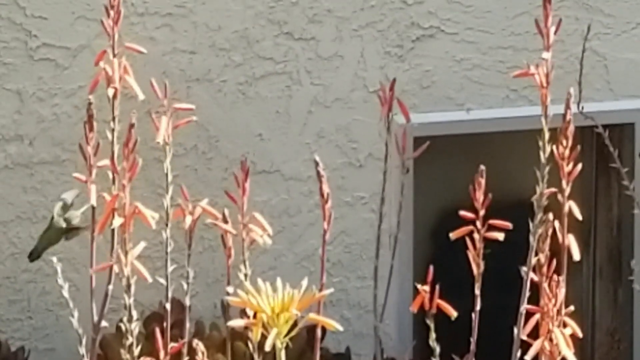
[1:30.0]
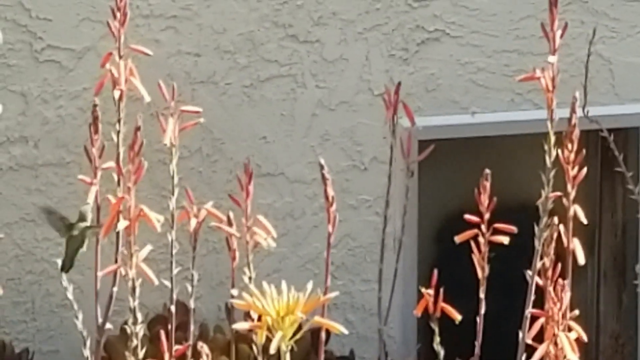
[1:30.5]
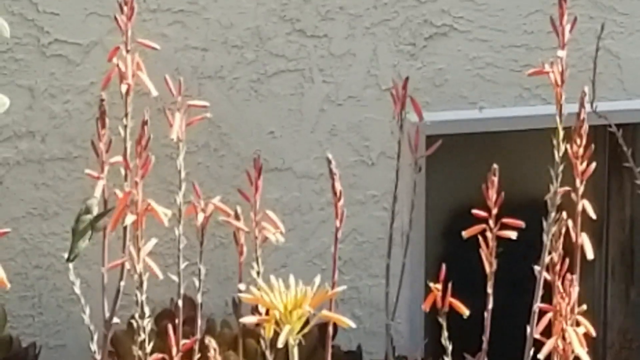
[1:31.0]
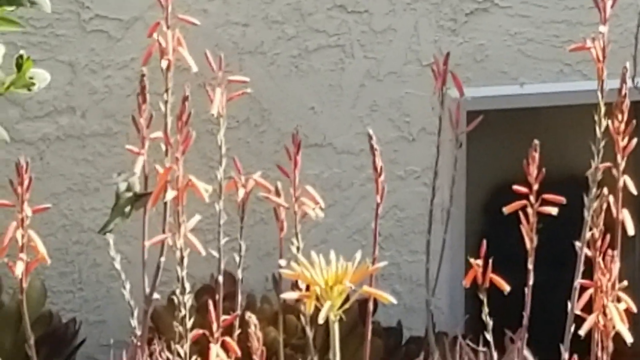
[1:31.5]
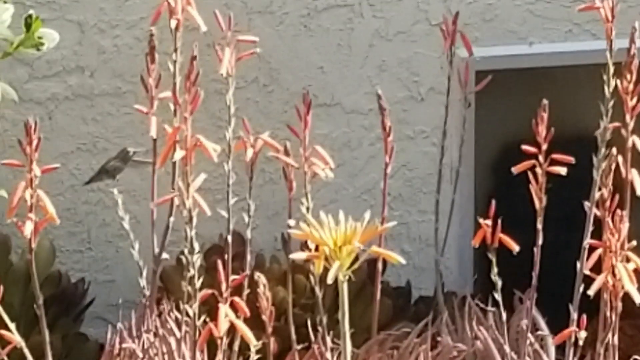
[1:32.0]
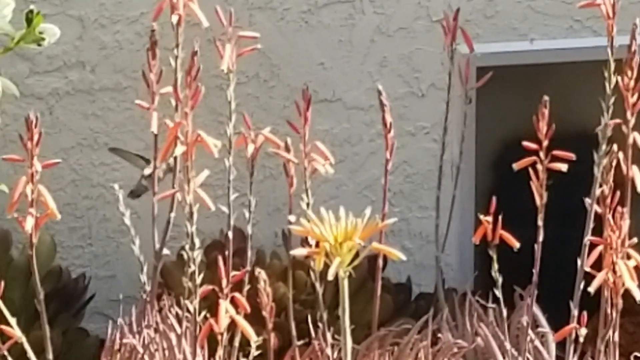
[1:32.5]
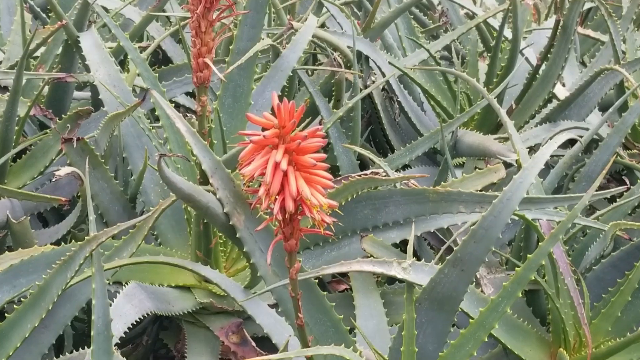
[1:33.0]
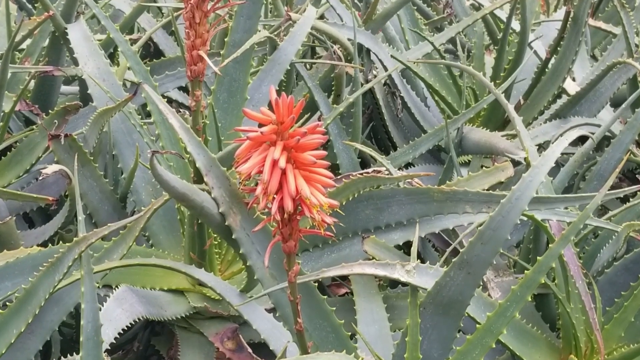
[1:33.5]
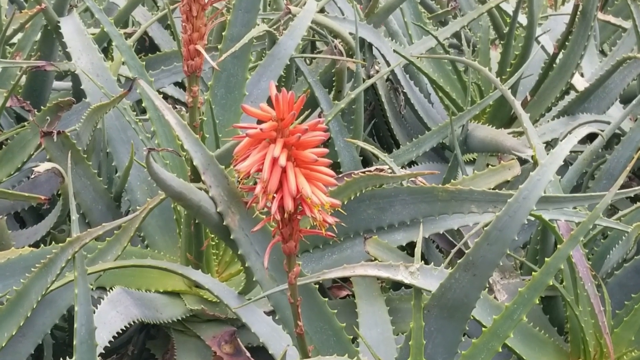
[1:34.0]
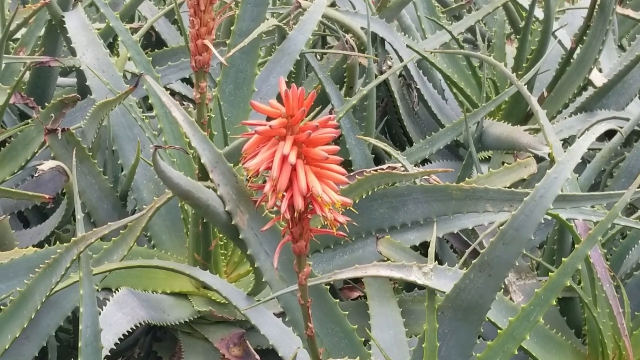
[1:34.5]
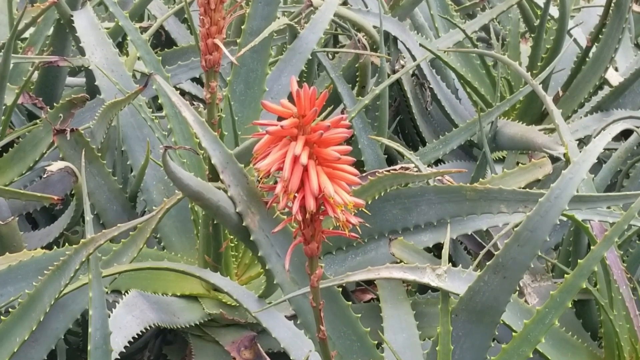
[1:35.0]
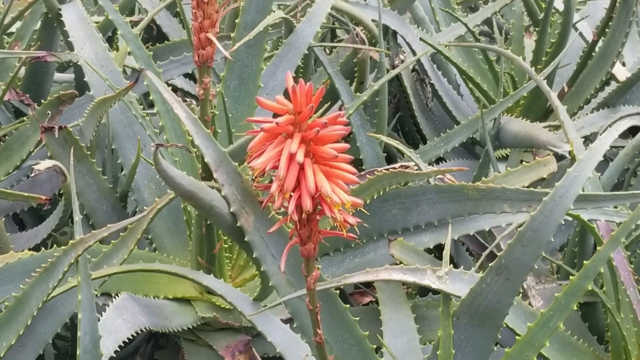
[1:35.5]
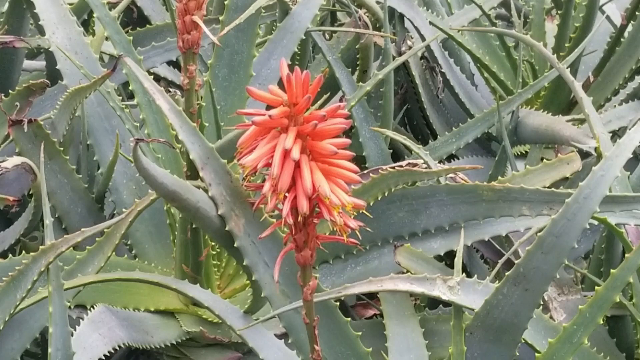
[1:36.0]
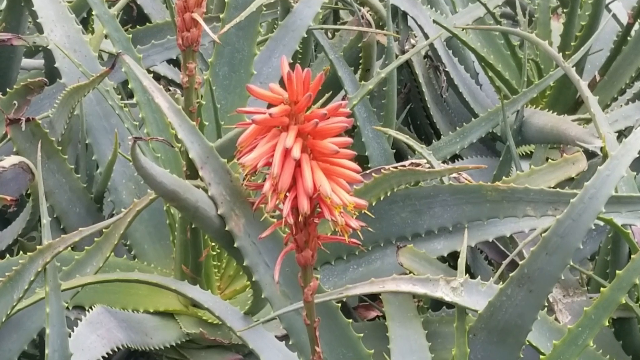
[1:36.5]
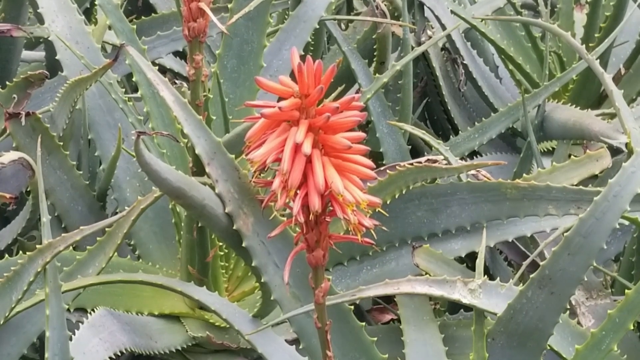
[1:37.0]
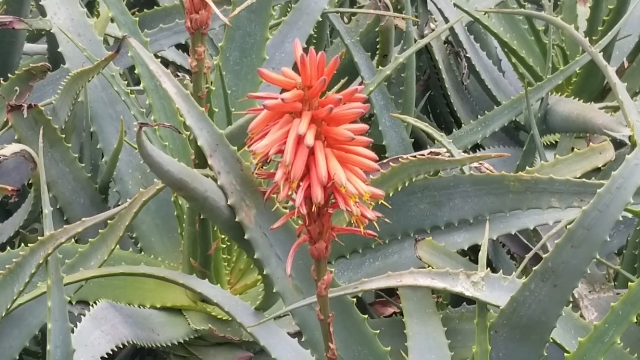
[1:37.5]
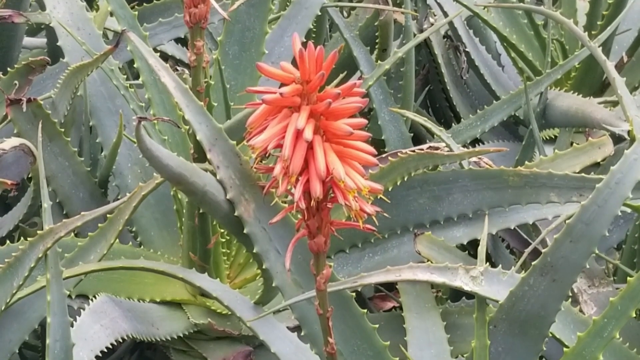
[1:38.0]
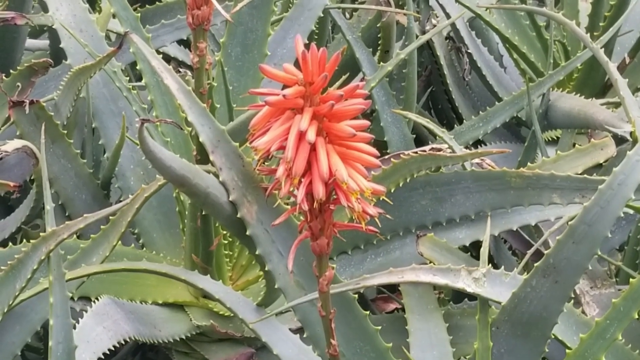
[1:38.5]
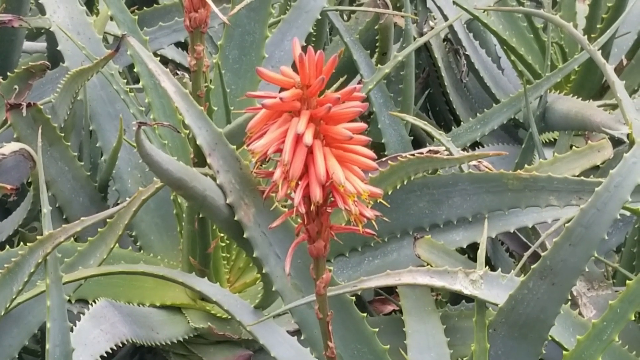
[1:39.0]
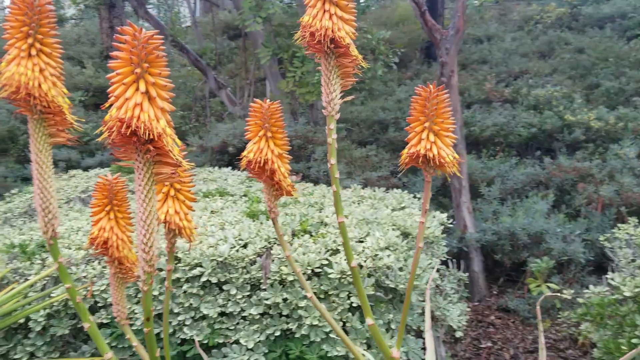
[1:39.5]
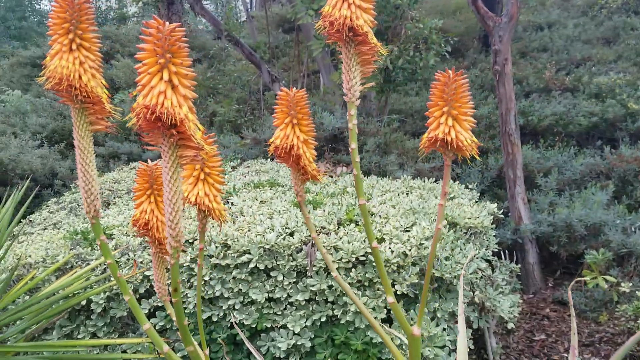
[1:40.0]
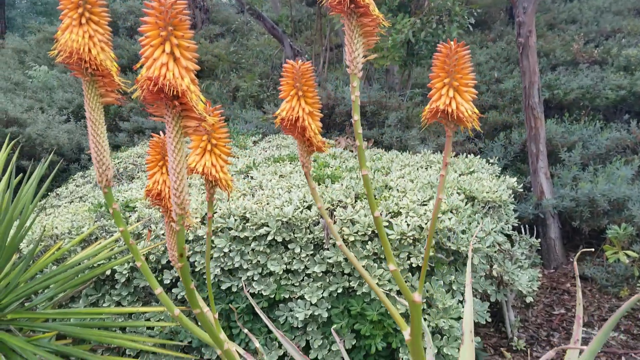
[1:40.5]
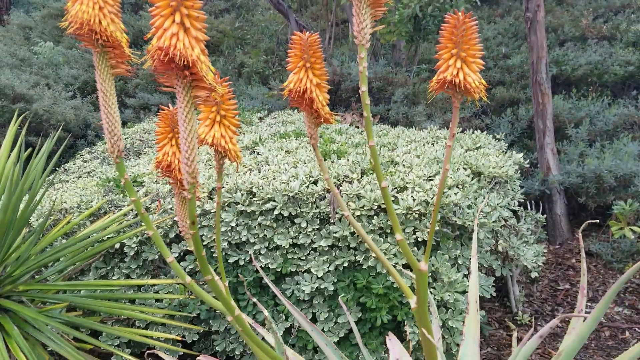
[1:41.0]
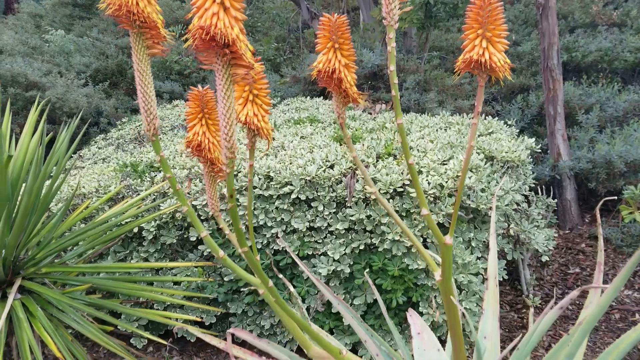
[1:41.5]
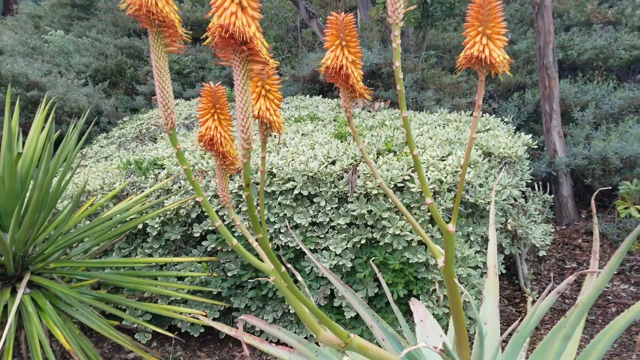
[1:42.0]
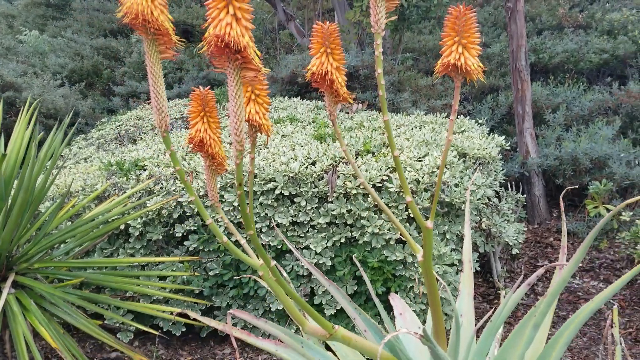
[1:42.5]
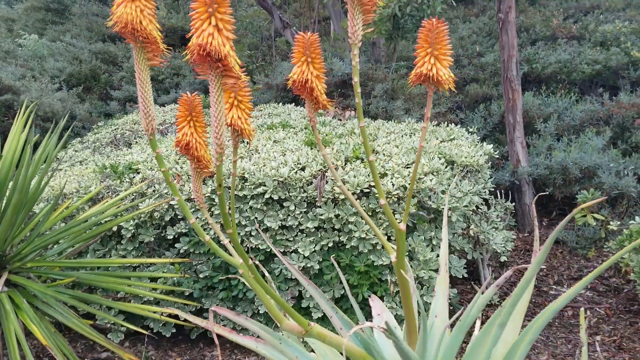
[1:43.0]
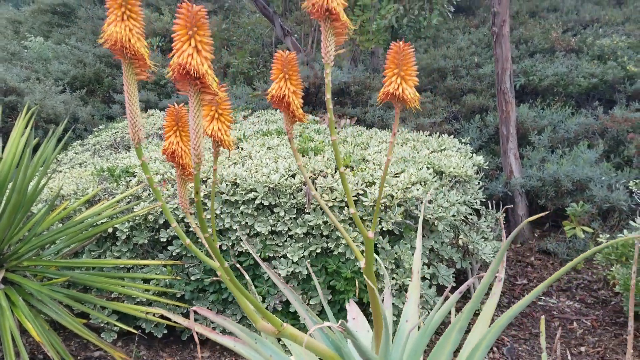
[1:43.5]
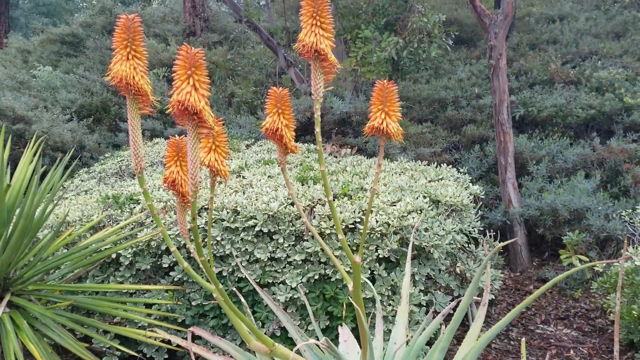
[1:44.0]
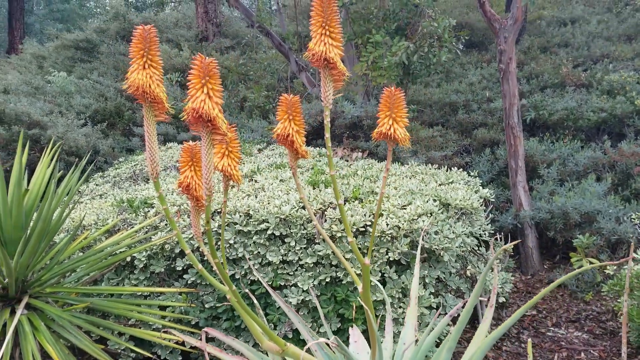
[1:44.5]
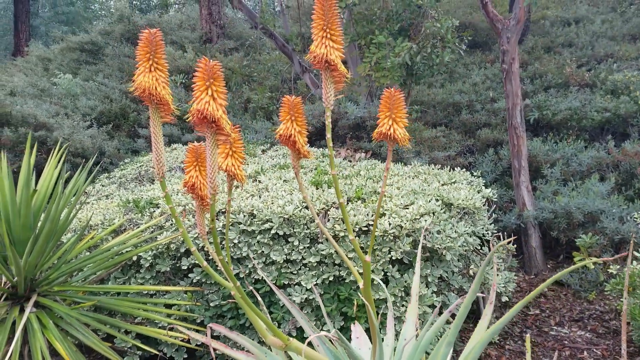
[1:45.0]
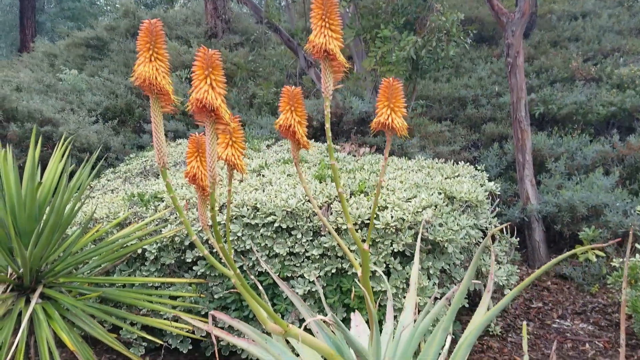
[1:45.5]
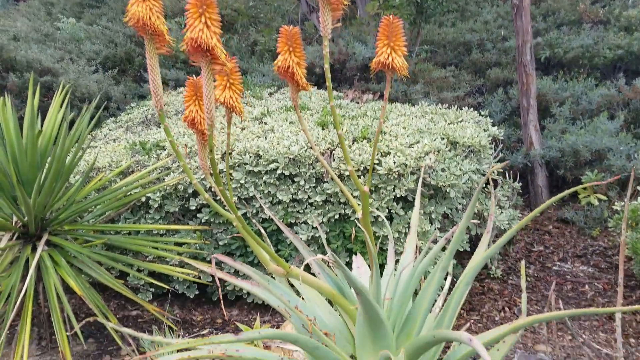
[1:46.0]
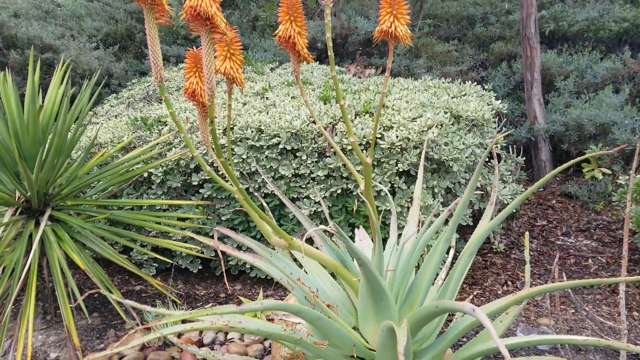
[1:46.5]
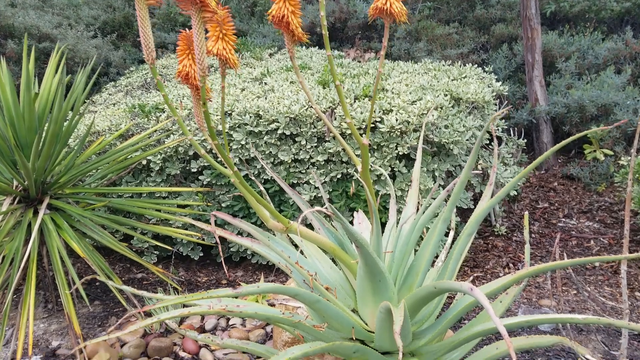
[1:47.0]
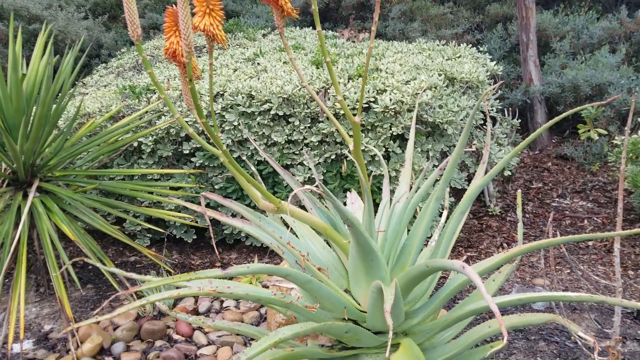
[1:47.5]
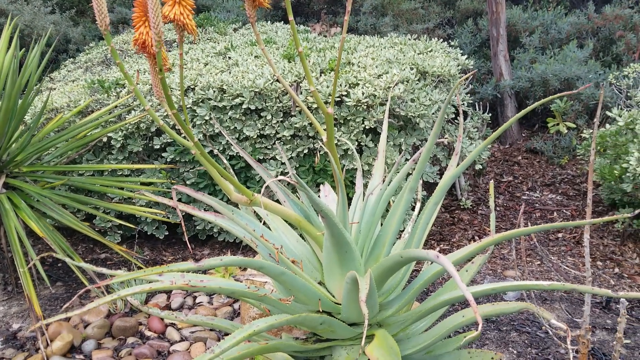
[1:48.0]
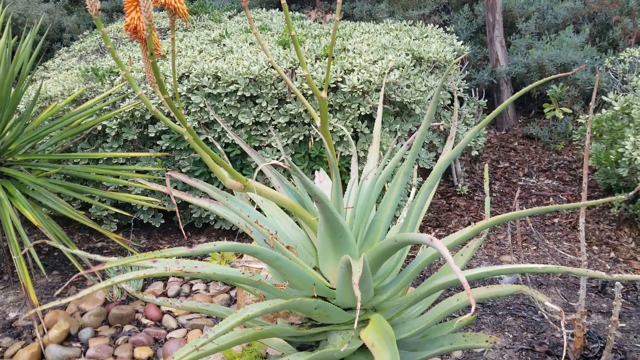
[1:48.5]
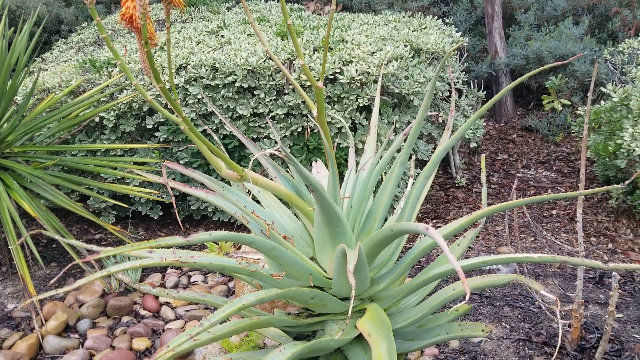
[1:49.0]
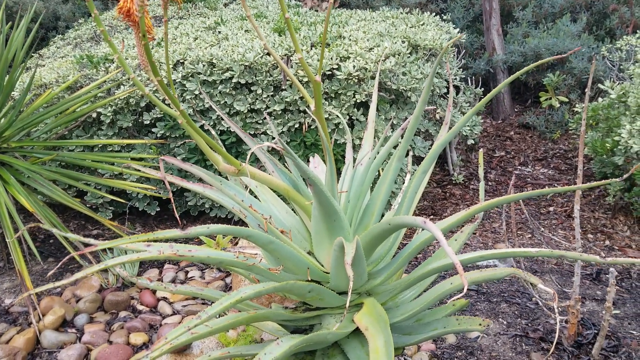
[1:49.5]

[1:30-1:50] The hummingbird continues pollinating flowers. The video then cuts to a closer view of quite a few aloe plants, mainly their green leaves, with two flower buds: one in the background, kind of obscured to the left, and one pretty much centered with almost a red hue. The camera zooms in on the centered bud. Shortly after, it cuts to other aloe flower buds that are much lighter, more of an orange hue, in a less close view with some trees and bushes in the background; the camera zooms out and tilts from top to bottom.